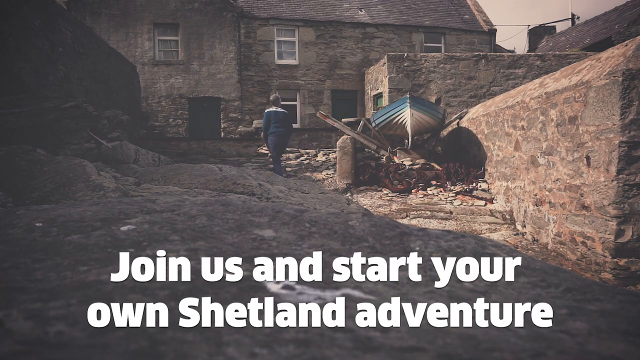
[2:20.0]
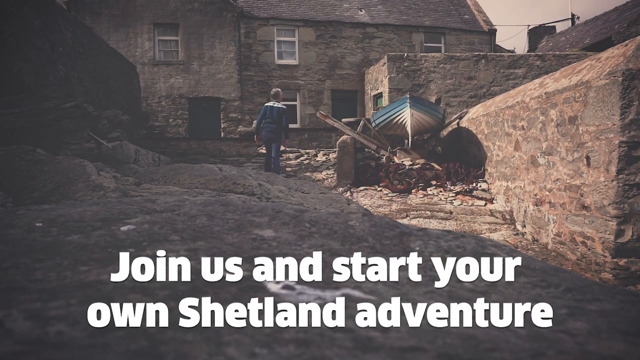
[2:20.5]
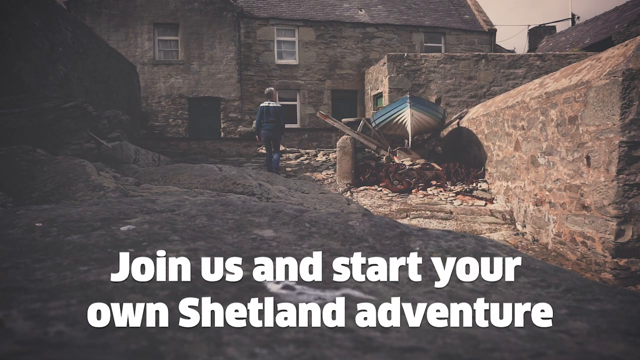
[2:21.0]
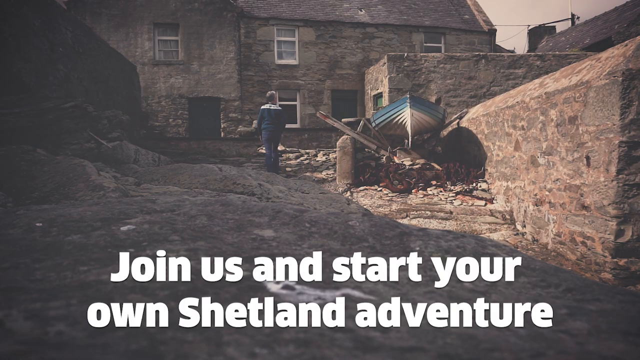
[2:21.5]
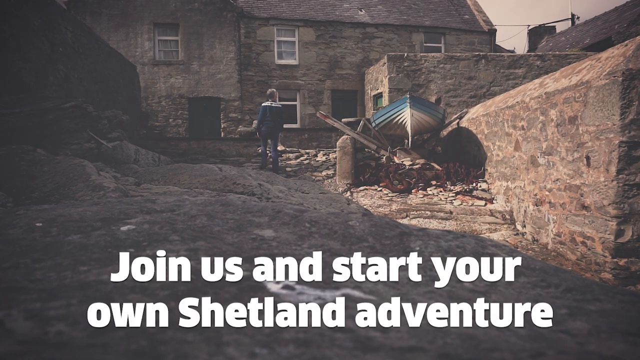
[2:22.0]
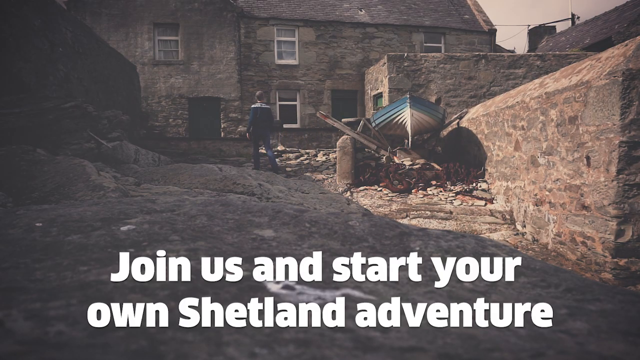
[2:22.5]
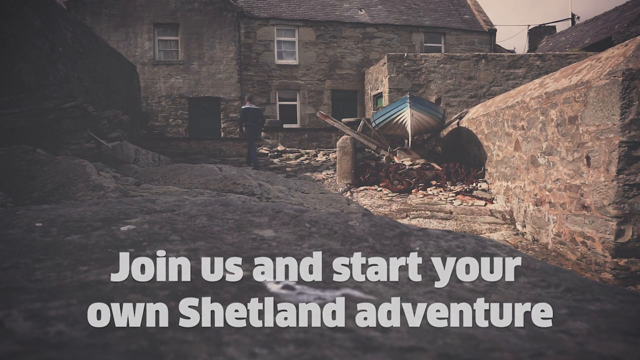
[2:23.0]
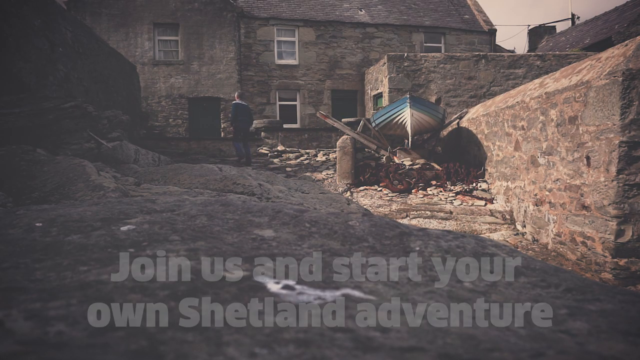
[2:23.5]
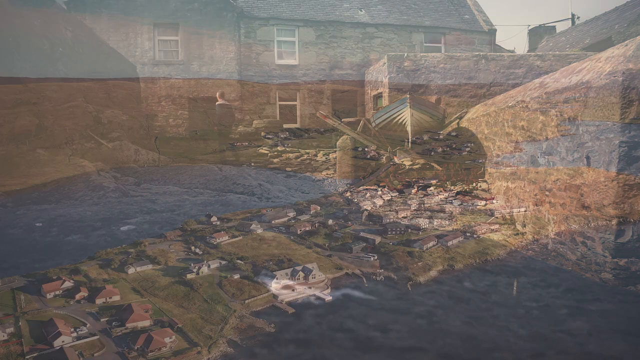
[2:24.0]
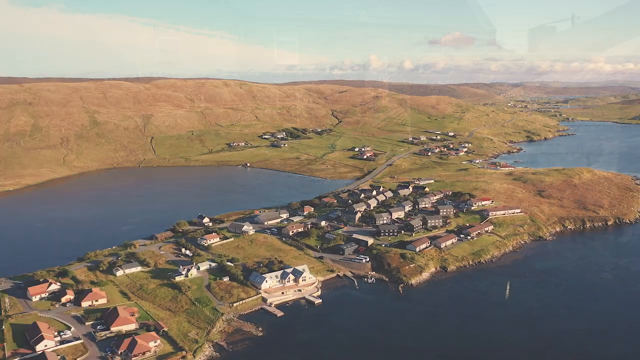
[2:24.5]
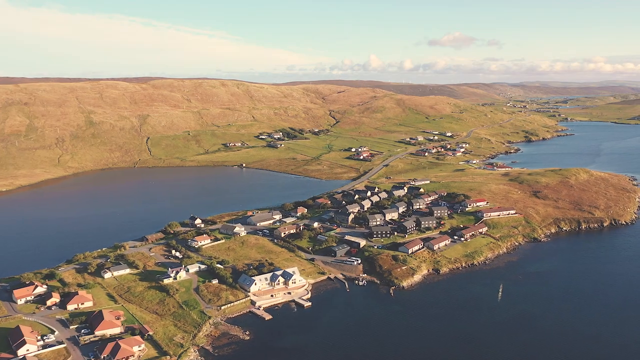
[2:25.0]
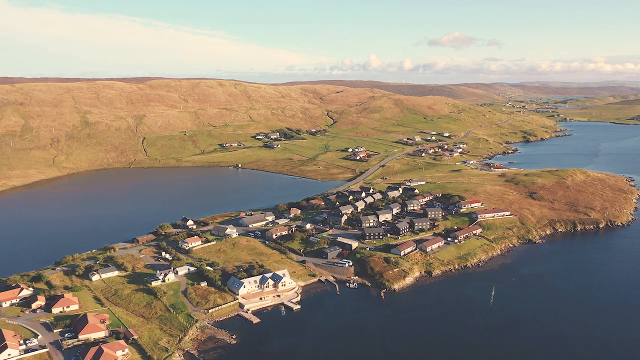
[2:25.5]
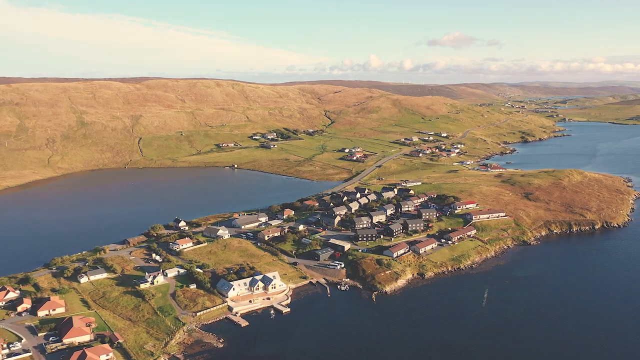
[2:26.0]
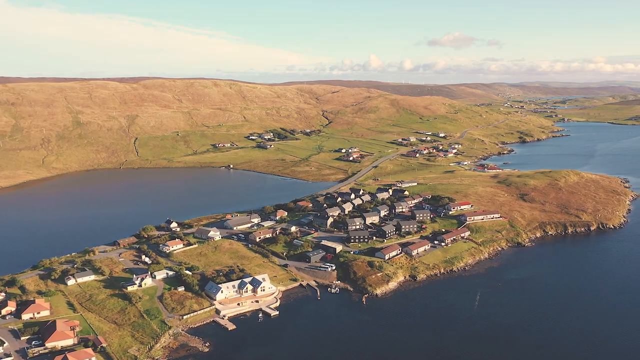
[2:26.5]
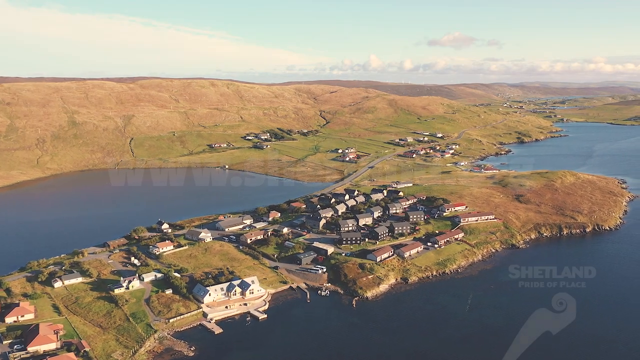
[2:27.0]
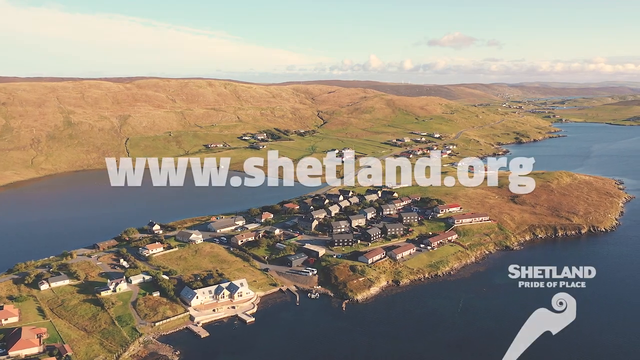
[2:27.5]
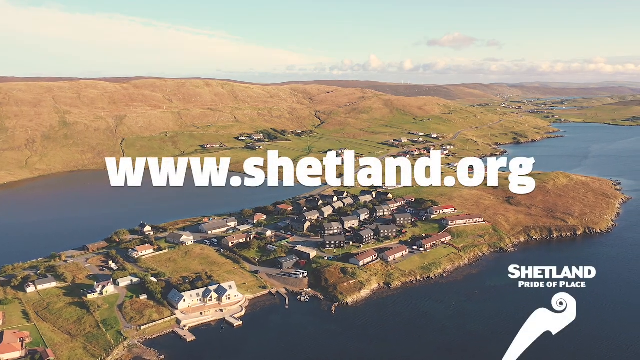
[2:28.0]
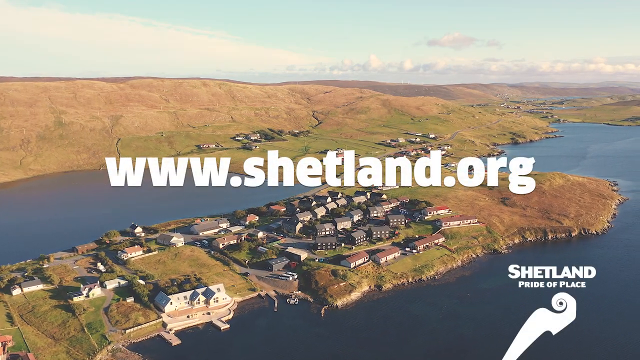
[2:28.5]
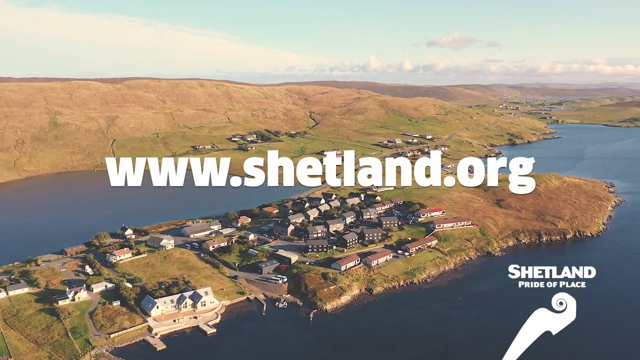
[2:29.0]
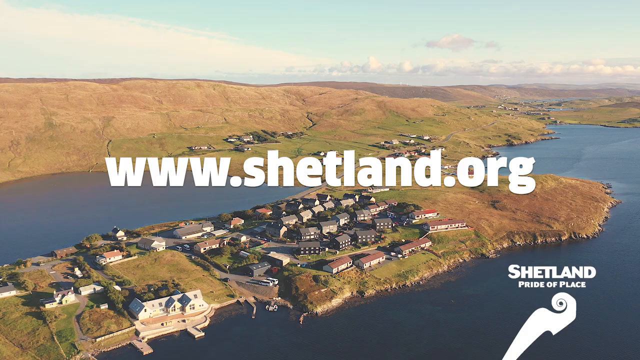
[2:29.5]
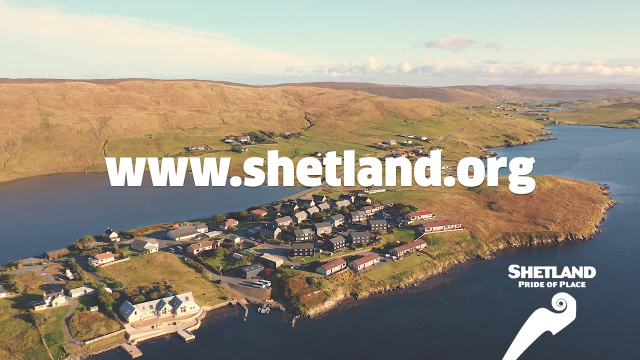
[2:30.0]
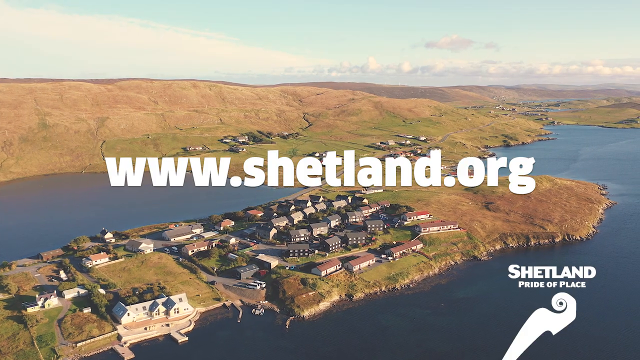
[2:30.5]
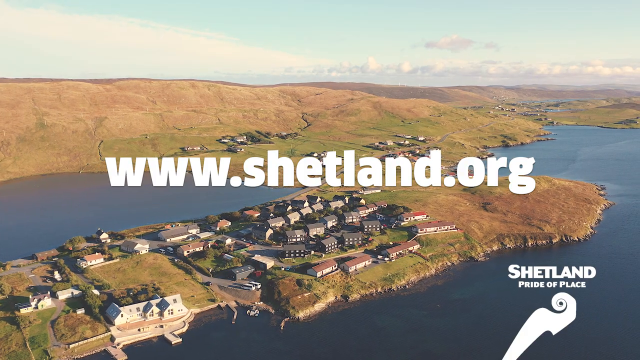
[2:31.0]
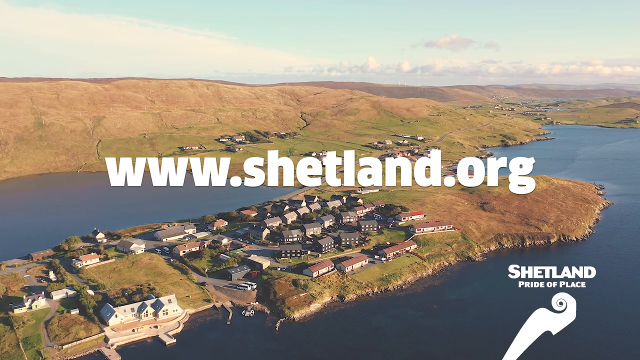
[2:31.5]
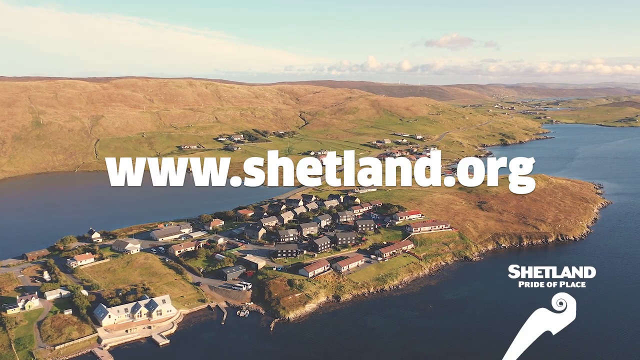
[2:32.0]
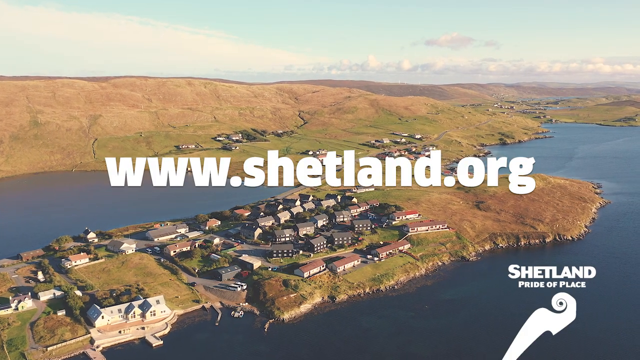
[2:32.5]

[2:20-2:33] The text "join us and start your own Shetland adventure" fades away, and the woman walks up and out of shot as the image of the stony buildings with the boat on hard standing fades. It fades to a bird's-eye view of Shetland with green landscape and ocean surrounding it, lots of houses below and a blue sky. The words "www.shetland.org Shetland Pride of Place" with a logo fade into the shot as the video pans right across the landscape.